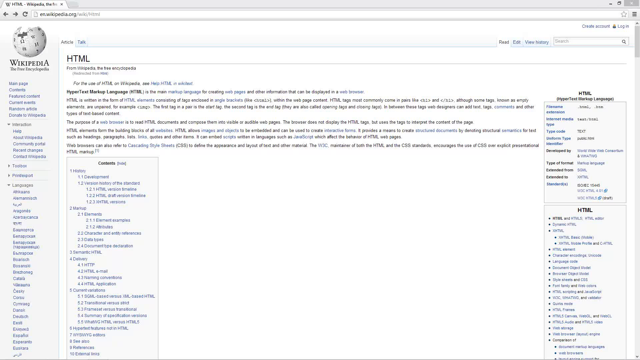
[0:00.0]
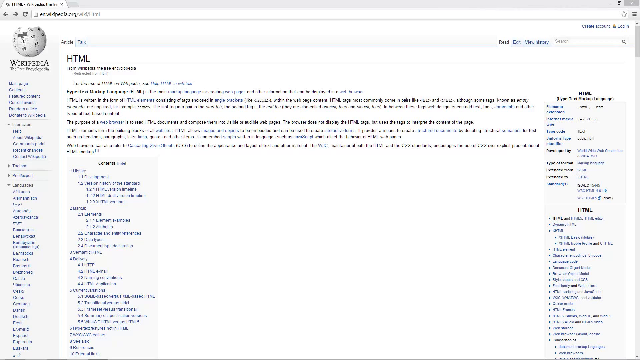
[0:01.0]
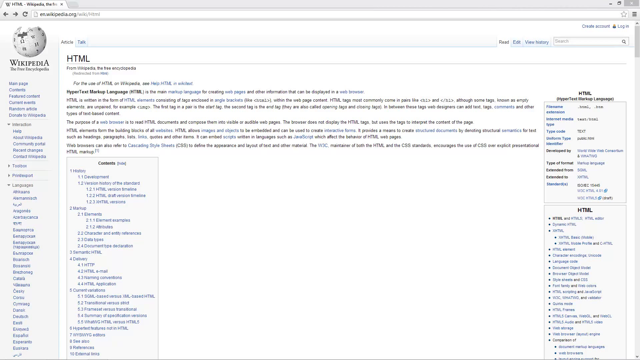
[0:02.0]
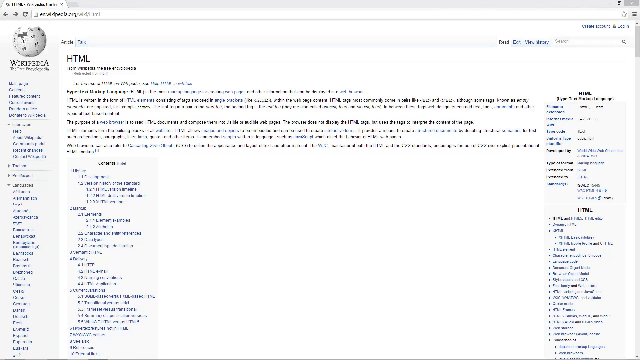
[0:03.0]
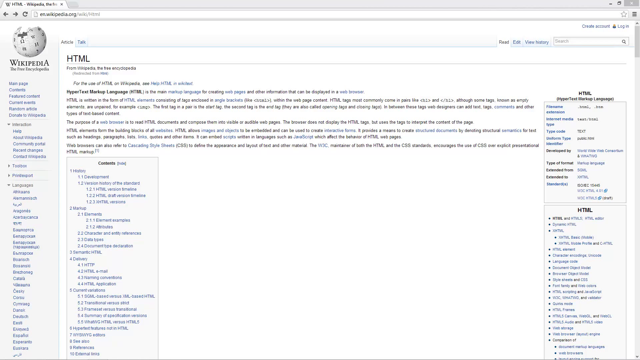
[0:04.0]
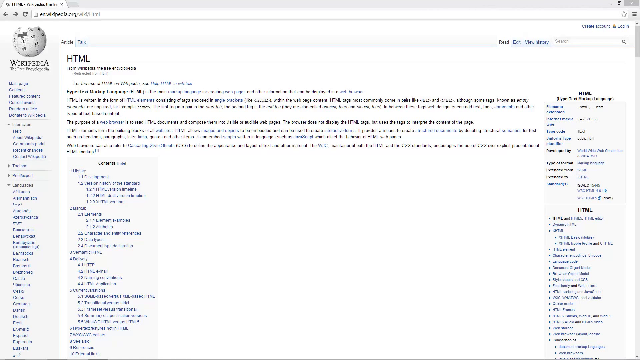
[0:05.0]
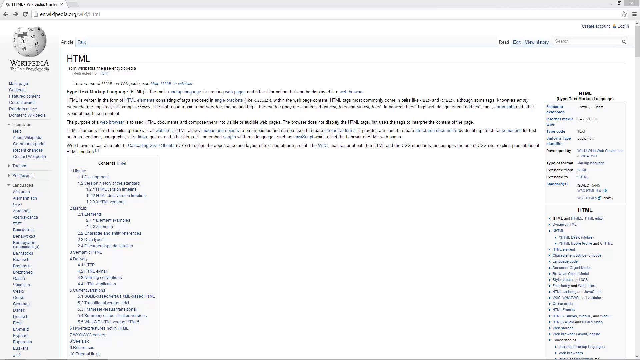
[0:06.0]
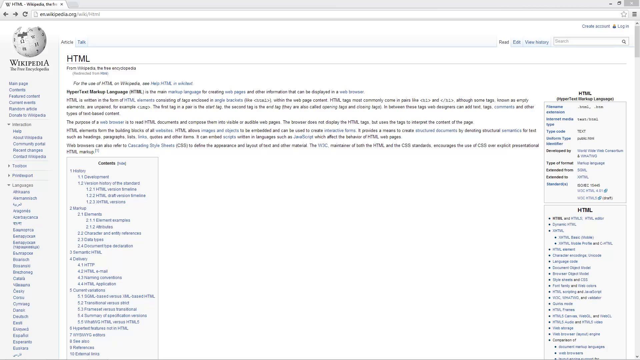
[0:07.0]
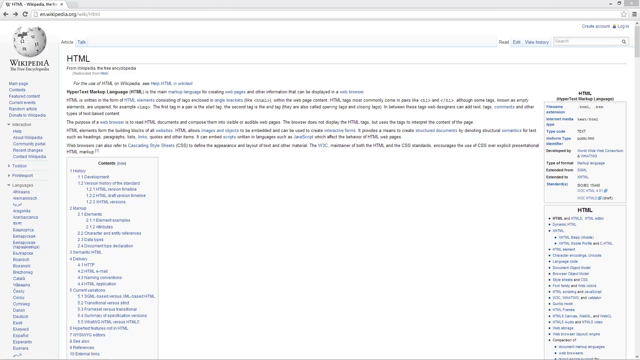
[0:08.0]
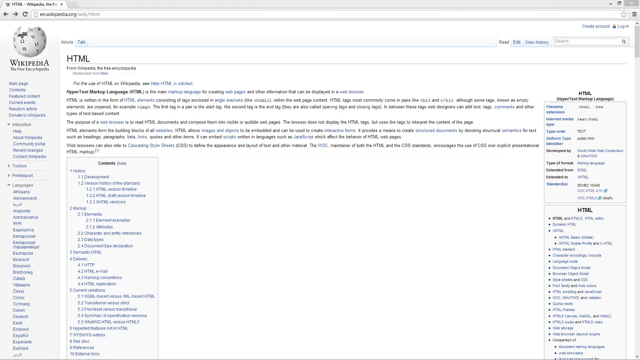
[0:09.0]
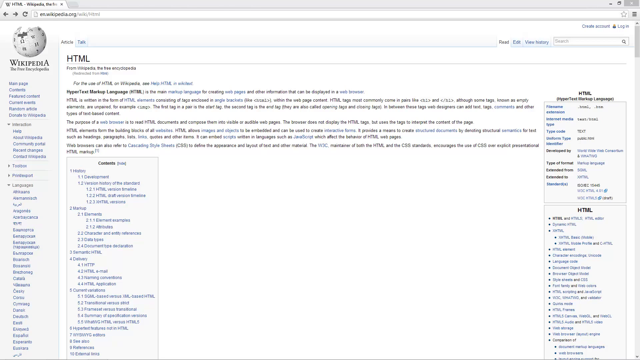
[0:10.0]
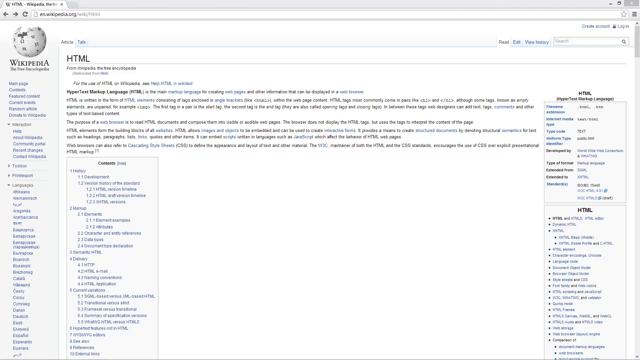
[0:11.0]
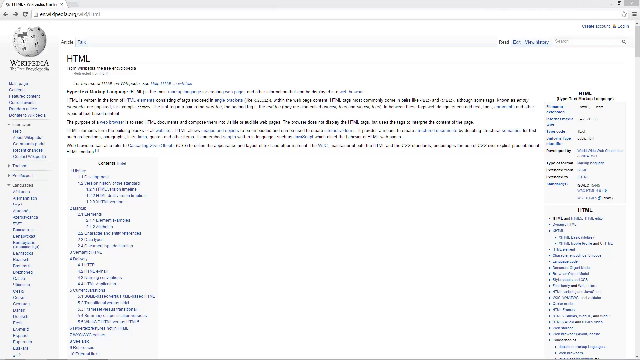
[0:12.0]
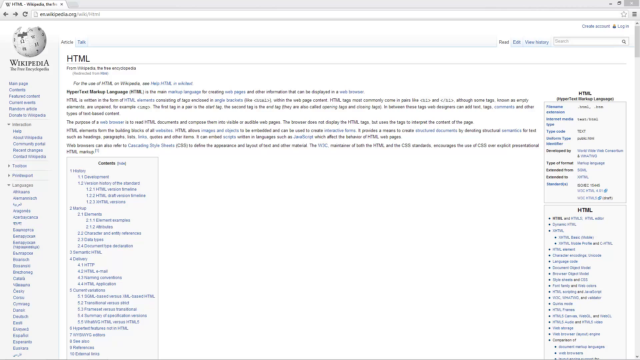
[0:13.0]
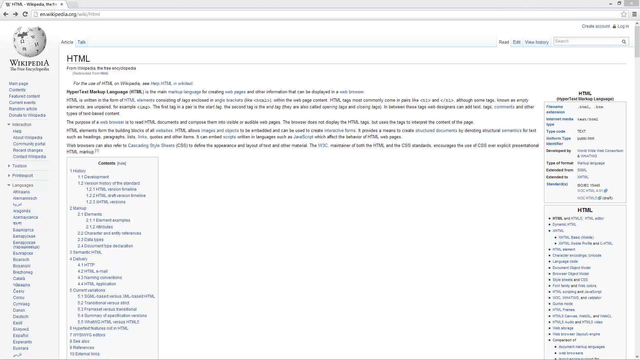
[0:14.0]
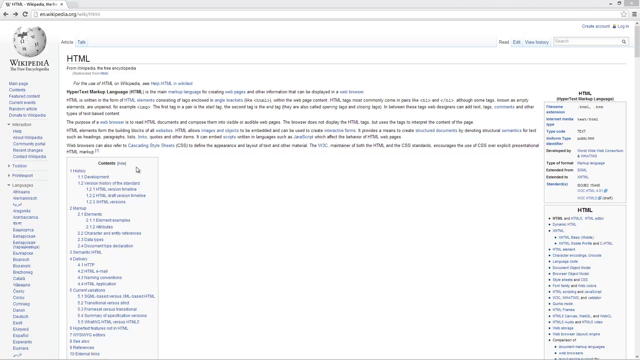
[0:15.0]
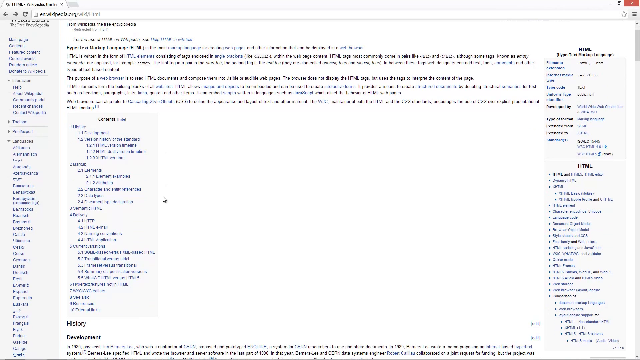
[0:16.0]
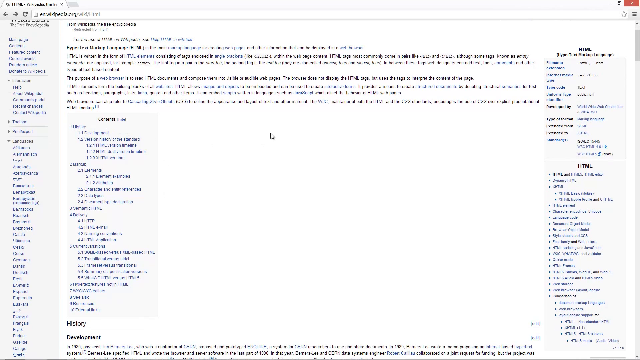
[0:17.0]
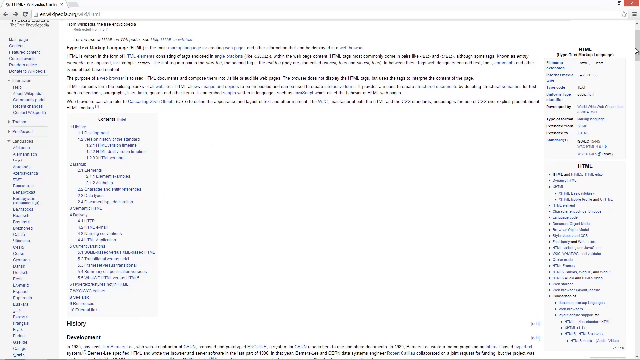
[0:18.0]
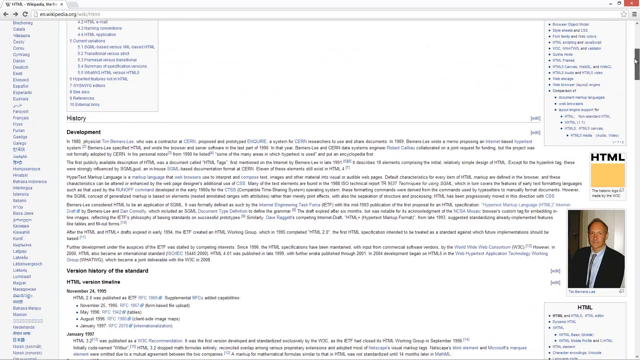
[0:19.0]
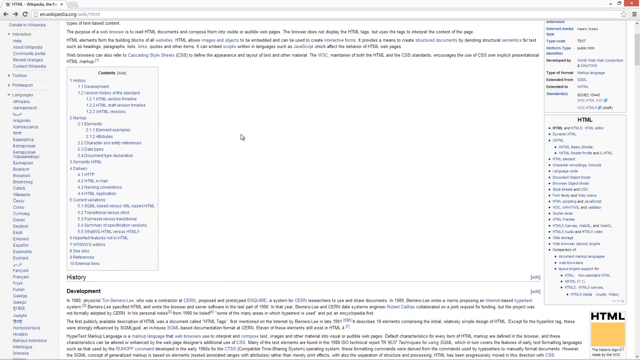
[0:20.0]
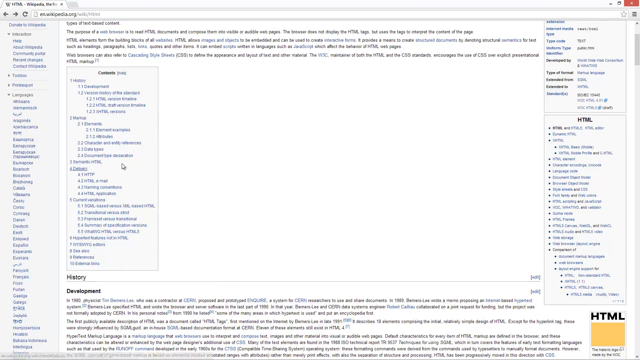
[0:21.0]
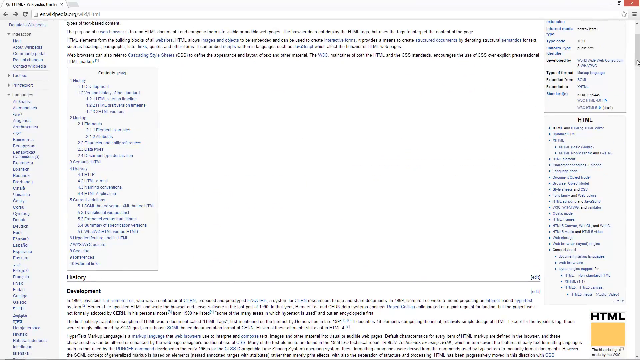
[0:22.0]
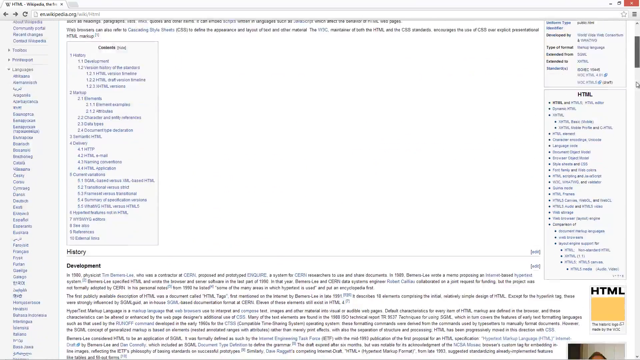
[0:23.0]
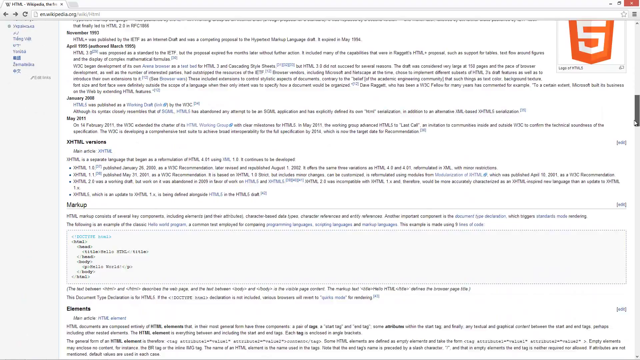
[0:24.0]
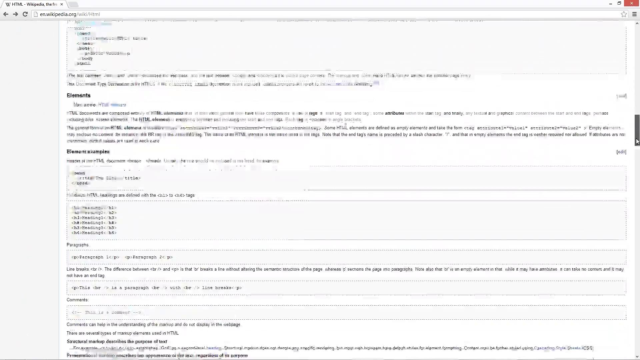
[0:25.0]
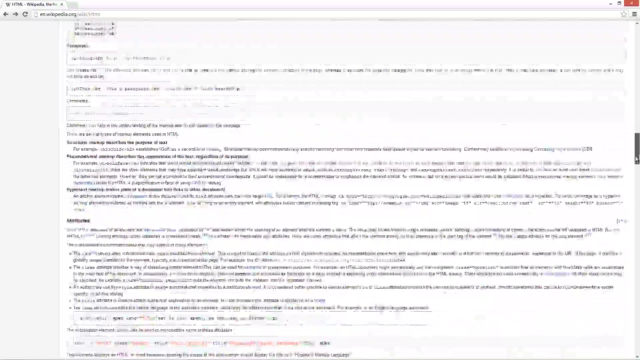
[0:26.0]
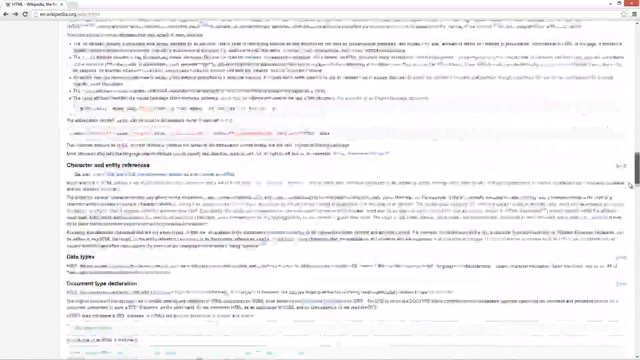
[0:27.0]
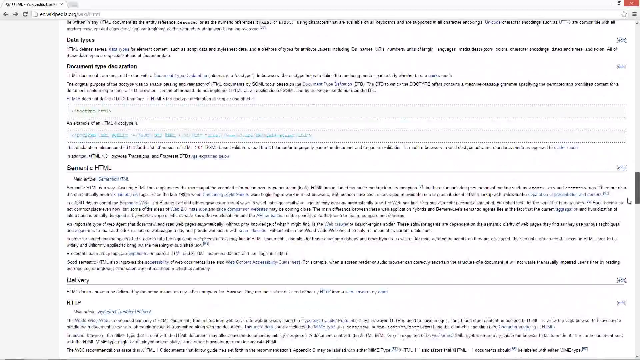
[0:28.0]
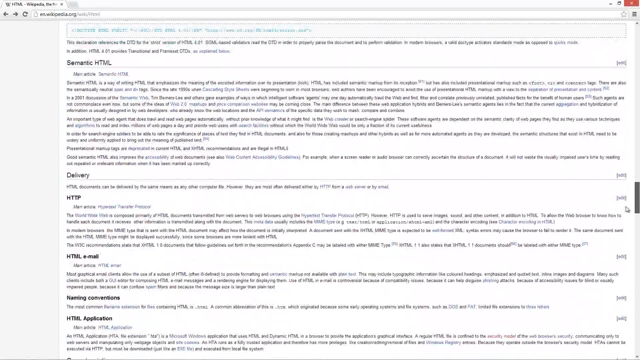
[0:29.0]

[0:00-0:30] A Wikipedia article page is open; the upper left corner reads "Wikipedia," and the page title is "HTML." The text is small and blurry, so the blue links cannot be read. The right-hand corner also reads "HTML." The mouse cursor, down toward the left side of the screen, moves to the scroll bar and the page starts scrolling down. Certain sections have bold labels, though their words are too blurry to read. The Wikipedia logo is visible: a white globe missing its top, made of something like puzzle pieces with different symbols or letters on them.